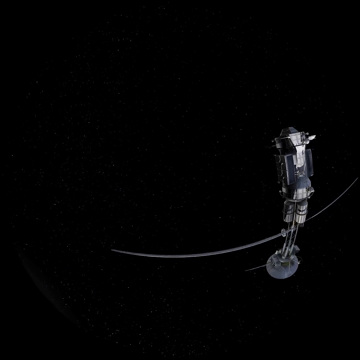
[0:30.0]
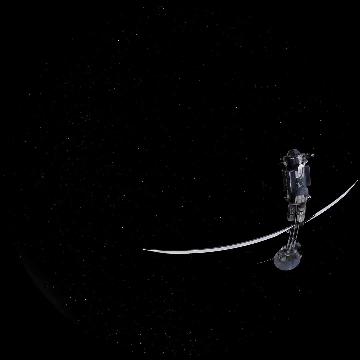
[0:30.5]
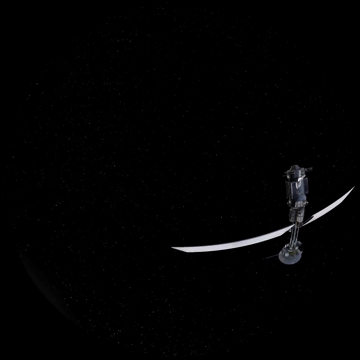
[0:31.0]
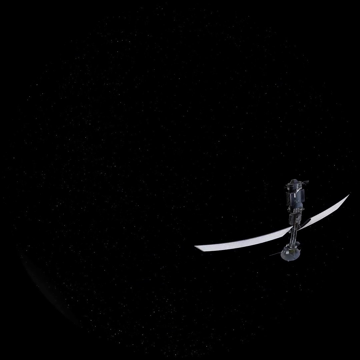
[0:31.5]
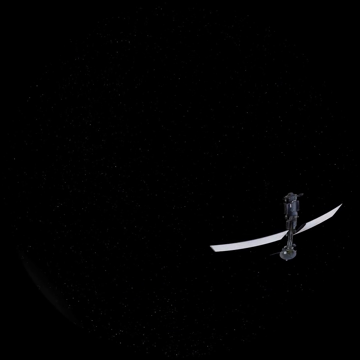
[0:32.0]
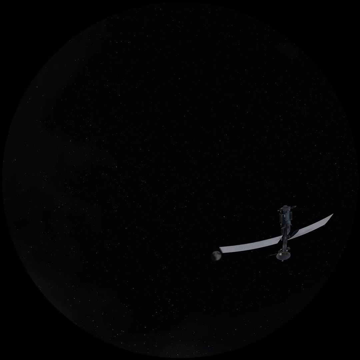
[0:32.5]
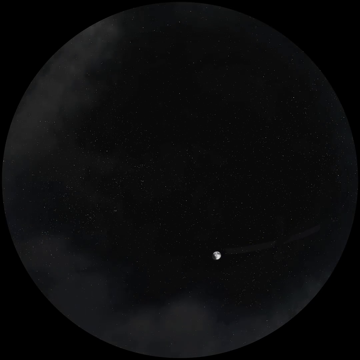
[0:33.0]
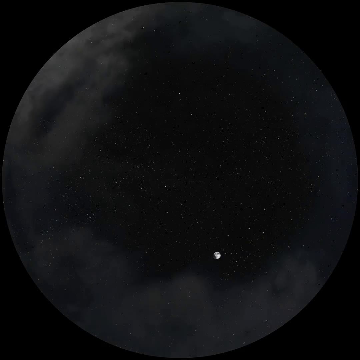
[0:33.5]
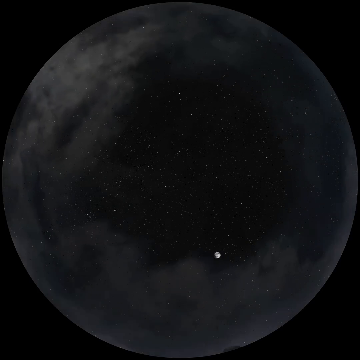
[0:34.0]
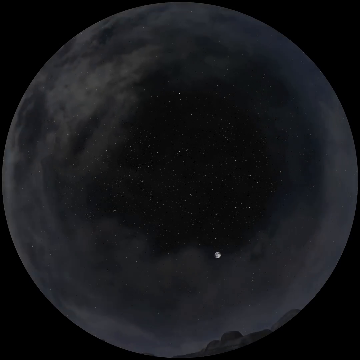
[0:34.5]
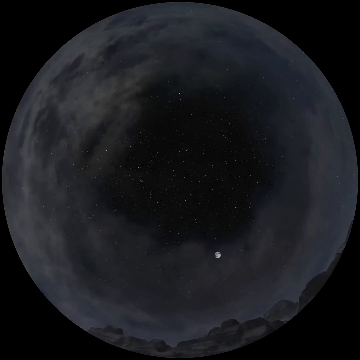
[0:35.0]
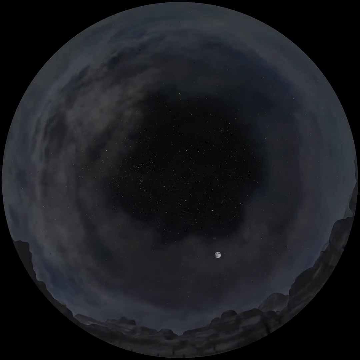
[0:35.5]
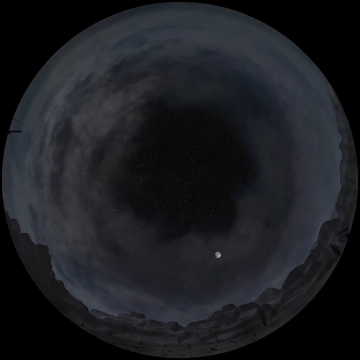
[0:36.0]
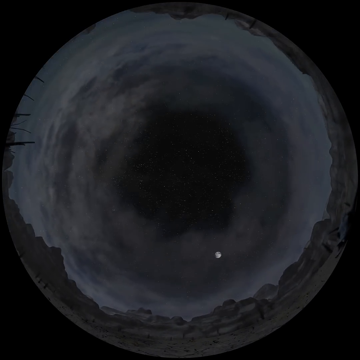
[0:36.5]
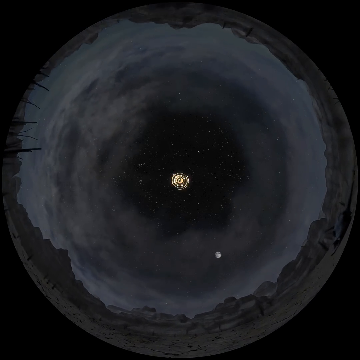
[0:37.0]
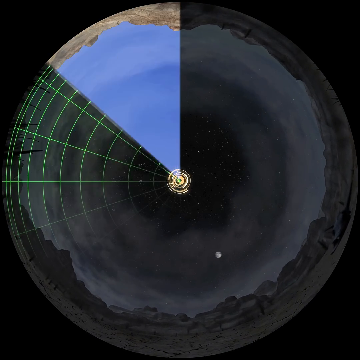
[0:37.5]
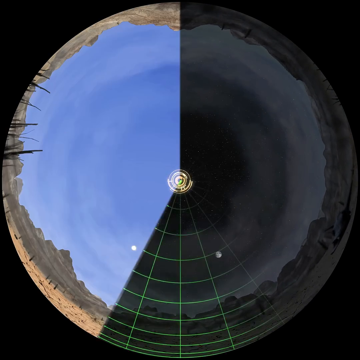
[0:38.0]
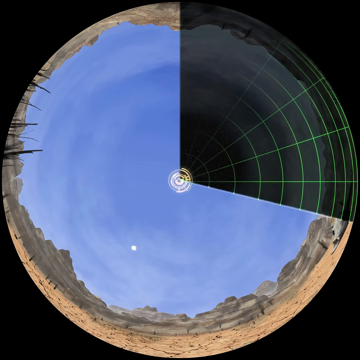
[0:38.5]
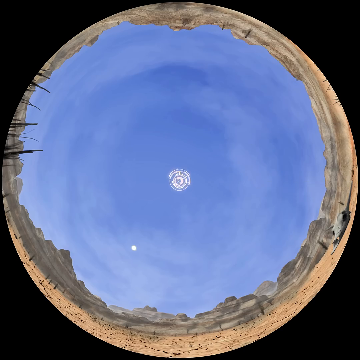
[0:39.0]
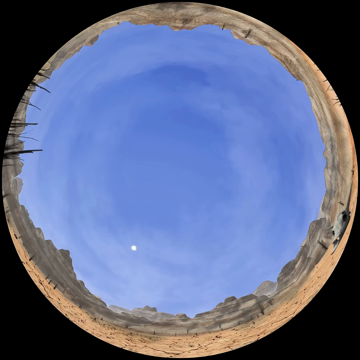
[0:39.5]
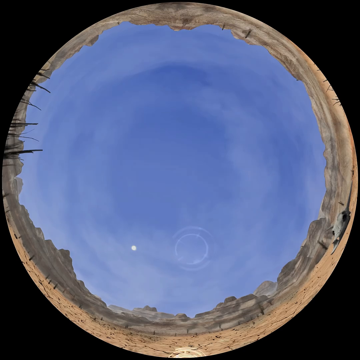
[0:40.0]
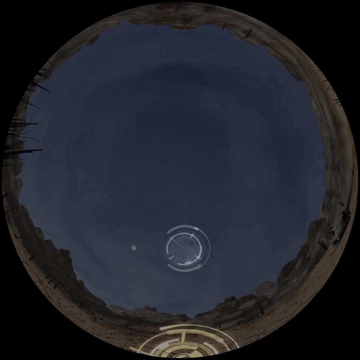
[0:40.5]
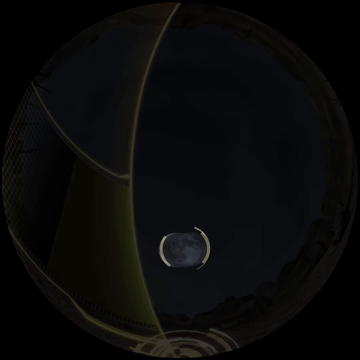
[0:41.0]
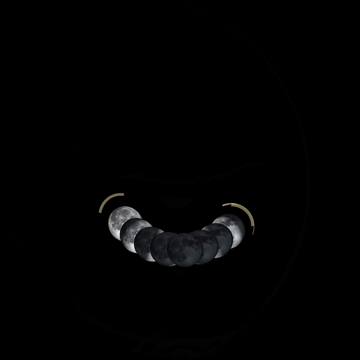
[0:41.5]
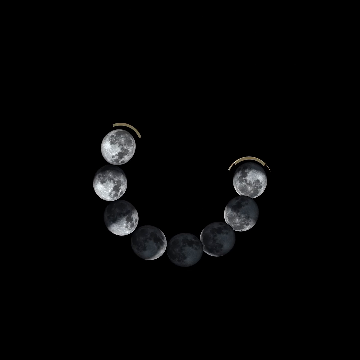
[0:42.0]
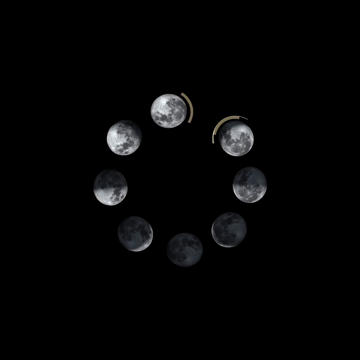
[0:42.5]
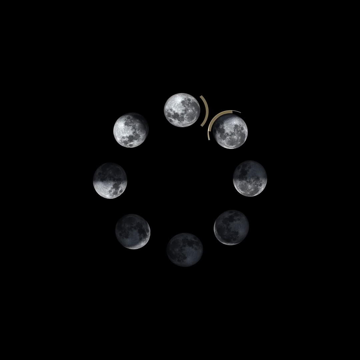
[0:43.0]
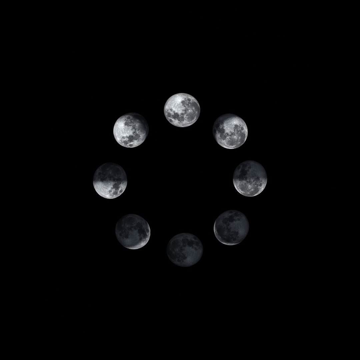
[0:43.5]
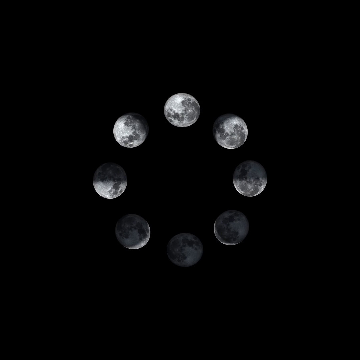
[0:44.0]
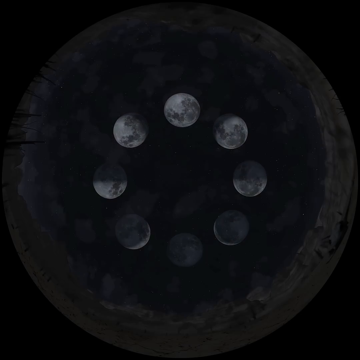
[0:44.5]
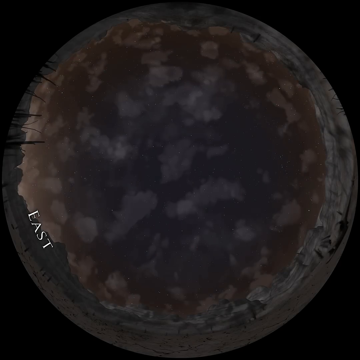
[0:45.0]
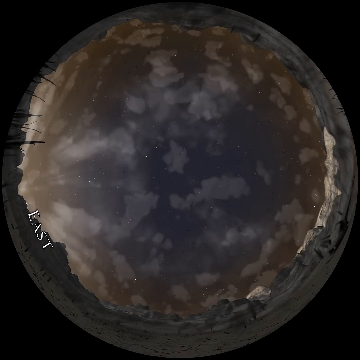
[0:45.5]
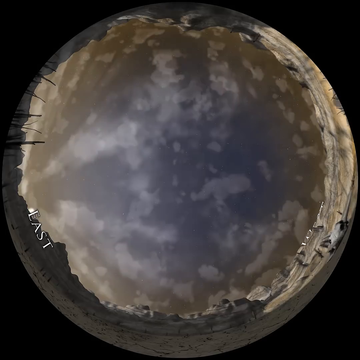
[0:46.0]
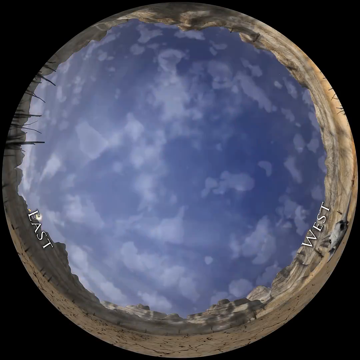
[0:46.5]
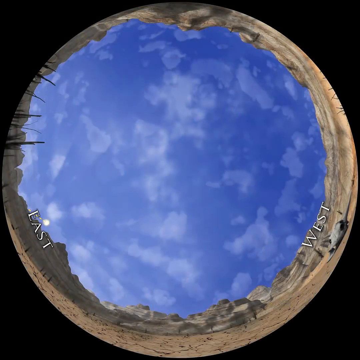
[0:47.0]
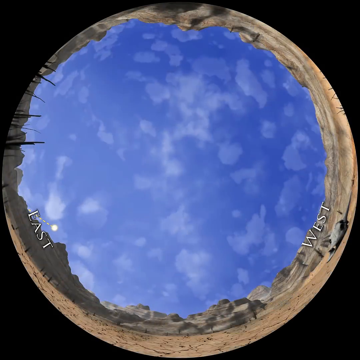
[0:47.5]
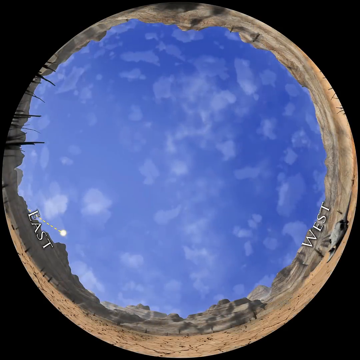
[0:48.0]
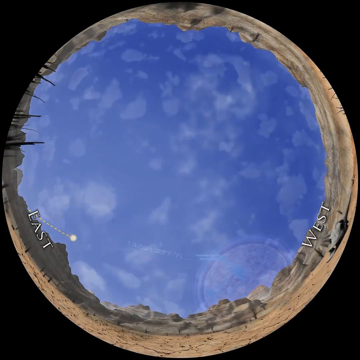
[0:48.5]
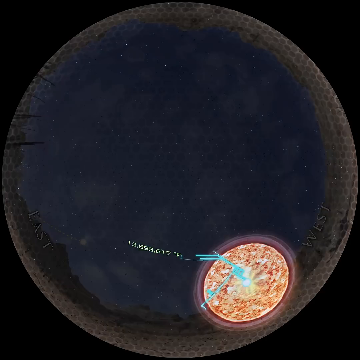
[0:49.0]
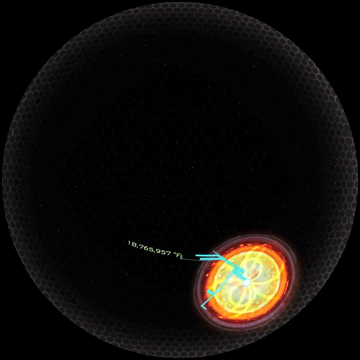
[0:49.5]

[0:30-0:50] A space station with two large panels on either side is in a large black area with nothing else around it. The video cuts to a circular camera view that zooms out, with what appears to be the ground at the bottom and the sky in the middle. Originally dark, the image changes in a swiping motion to show the same view during the day: rocks surround the circular view on every side, while the middle holds a blue sky with light, wispy clouds. It changes to a black screen that then shows a number of images of the moon, each with a different amount of light, as if showing the cycles of the moon, with a total of eight moons. Next comes another shot of the rocks around the circular sky, with the left side stating east and the right side stating west. Another image follows that appears to be a diagram of a circular object with a small yellow circle to its bottom right.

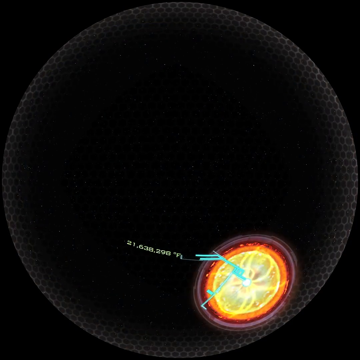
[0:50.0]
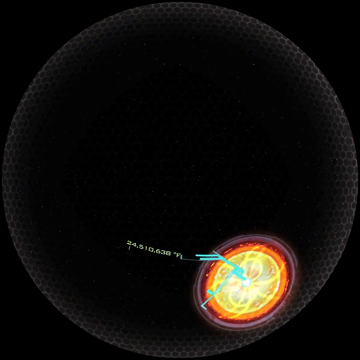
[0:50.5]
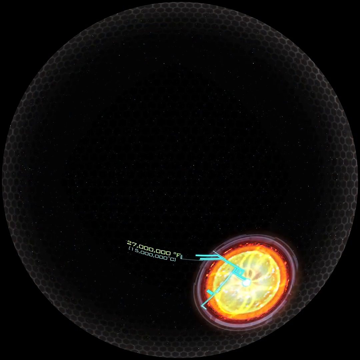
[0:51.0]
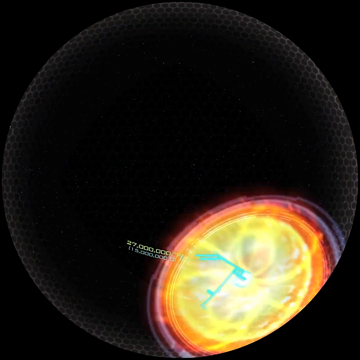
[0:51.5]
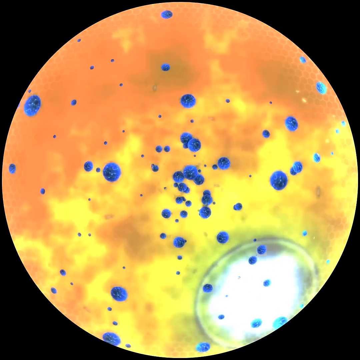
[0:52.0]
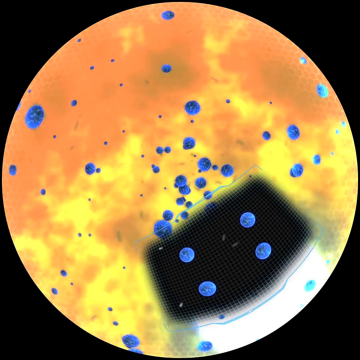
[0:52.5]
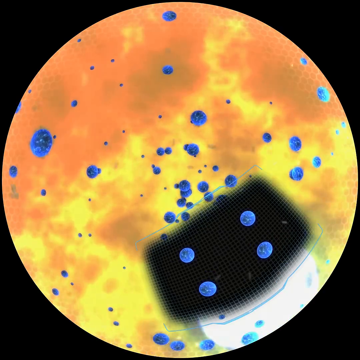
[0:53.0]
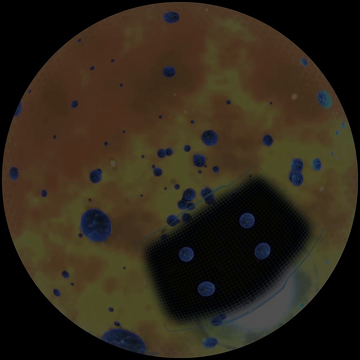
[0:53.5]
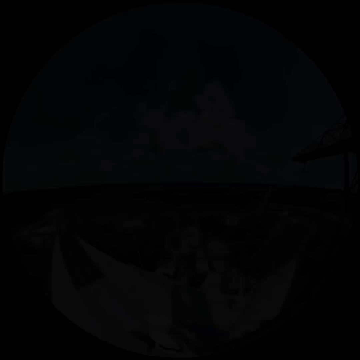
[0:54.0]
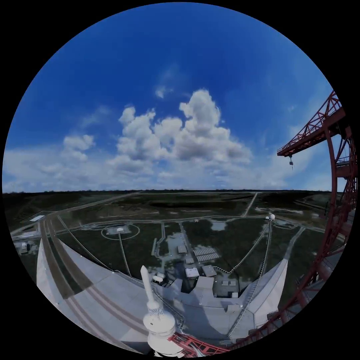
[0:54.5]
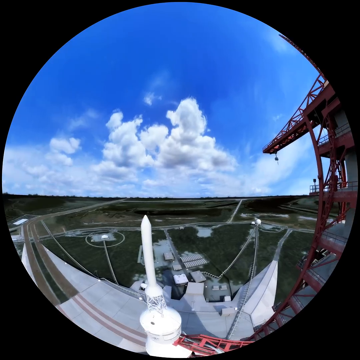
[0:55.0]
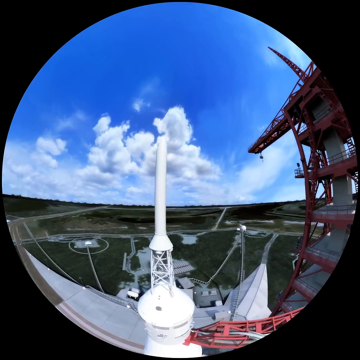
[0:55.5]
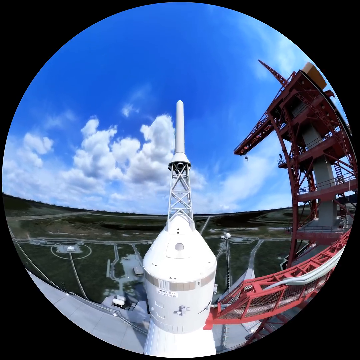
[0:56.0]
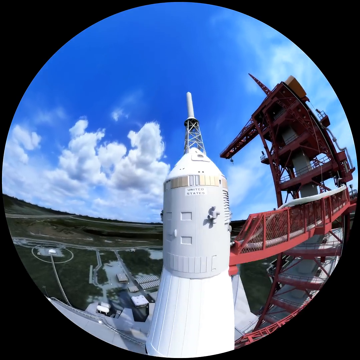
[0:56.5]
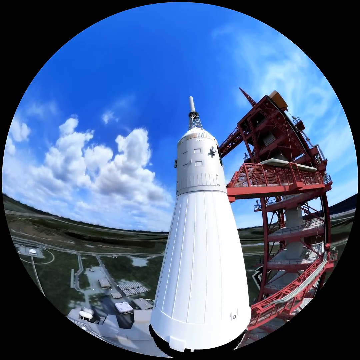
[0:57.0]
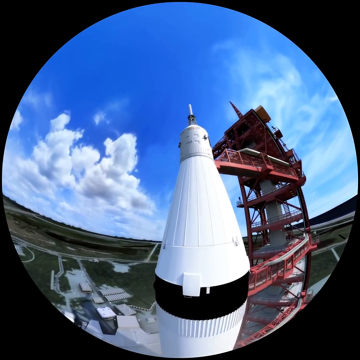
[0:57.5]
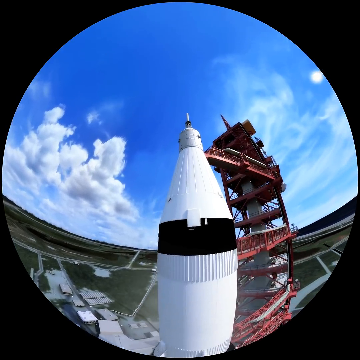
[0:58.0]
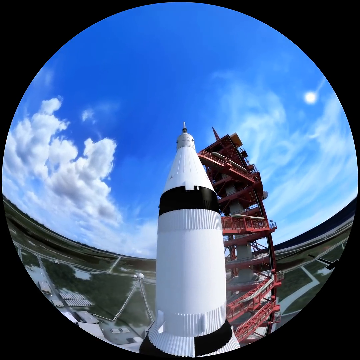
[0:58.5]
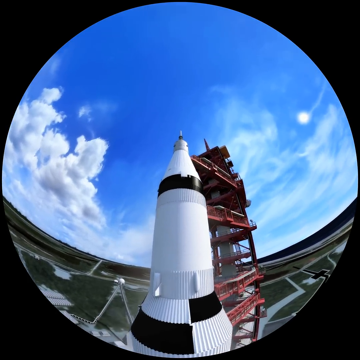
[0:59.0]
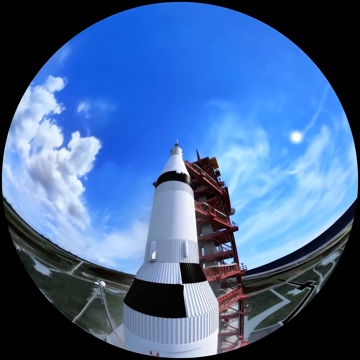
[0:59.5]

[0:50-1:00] A large circle is on the screen, shown with just a light outline. At its bottom, near the right, is a small yellow circle surrounded by an orange ring and then a red ring. A blue line with what appear to be coordinates points toward the center of the yellow circle. The smaller circle expands to take up the rest of the larger circle, so that most of the screen looks red, orange and yellow, with a number of blue dots all around. The view changes to a circular pinwheel-style camera view of a rocket platform. To the right is the platform itself, with red metal, a gray middle column, ladders and more, and the video shows the rocket close up.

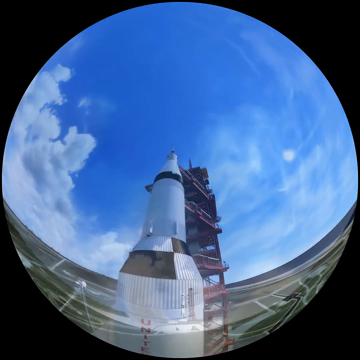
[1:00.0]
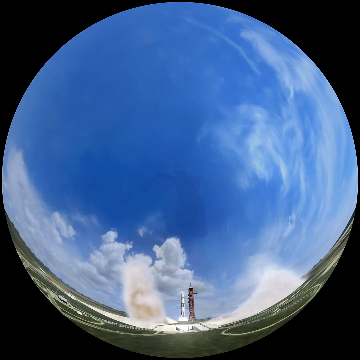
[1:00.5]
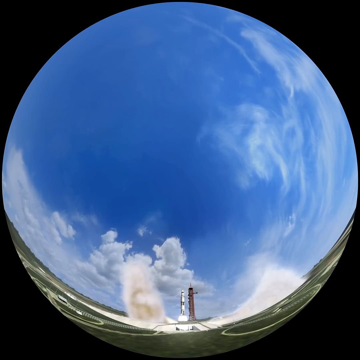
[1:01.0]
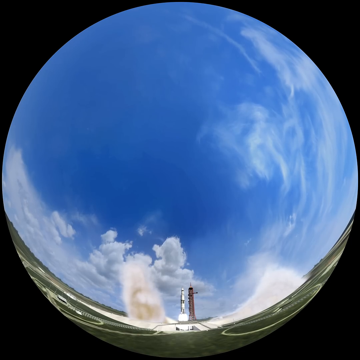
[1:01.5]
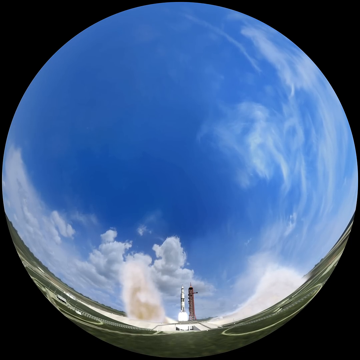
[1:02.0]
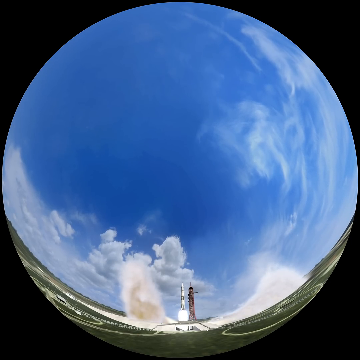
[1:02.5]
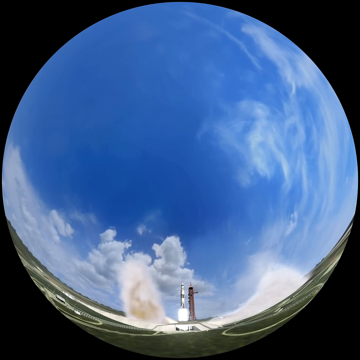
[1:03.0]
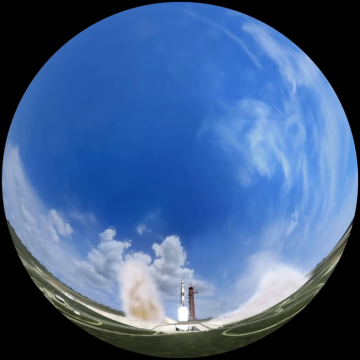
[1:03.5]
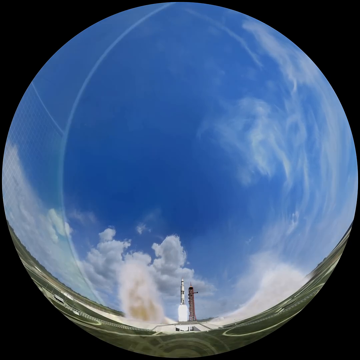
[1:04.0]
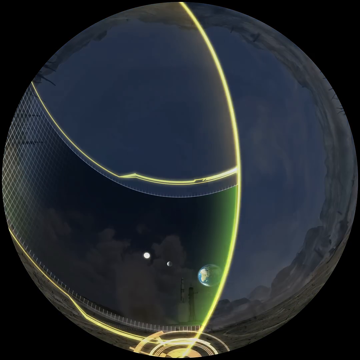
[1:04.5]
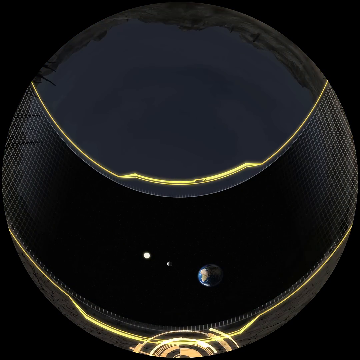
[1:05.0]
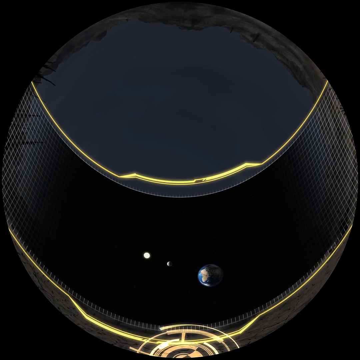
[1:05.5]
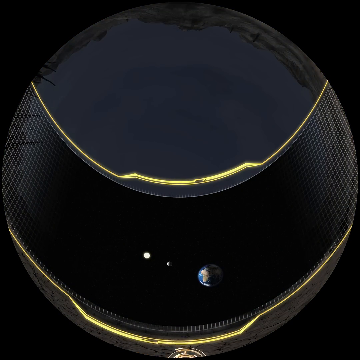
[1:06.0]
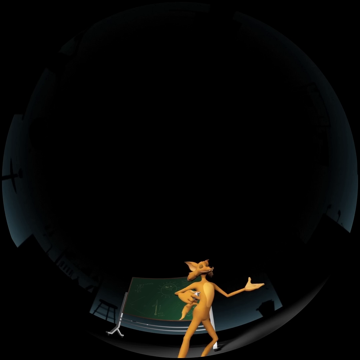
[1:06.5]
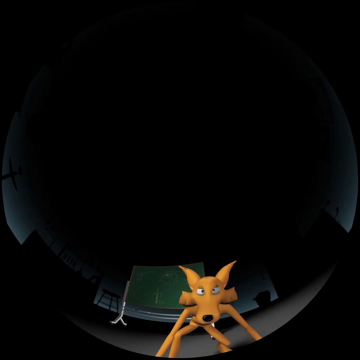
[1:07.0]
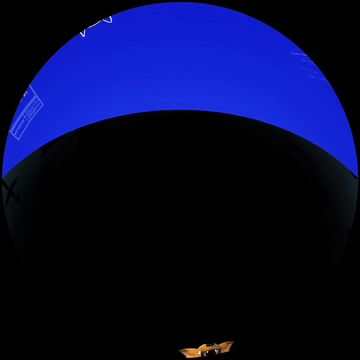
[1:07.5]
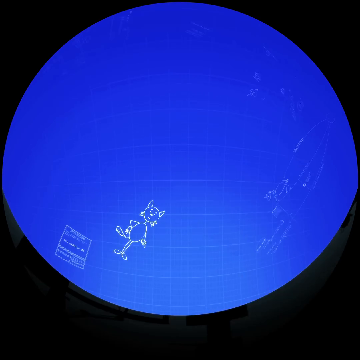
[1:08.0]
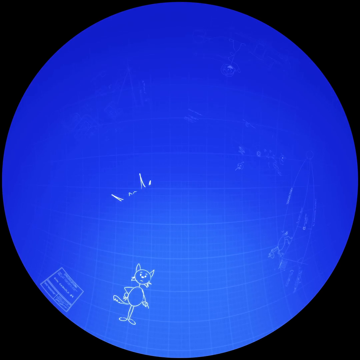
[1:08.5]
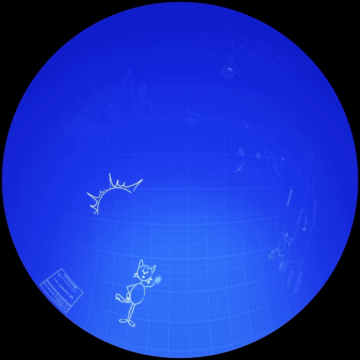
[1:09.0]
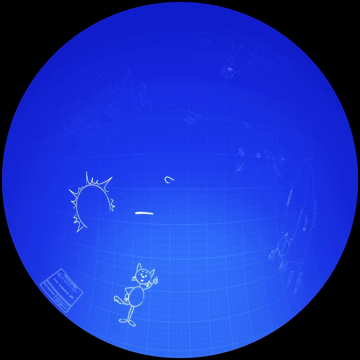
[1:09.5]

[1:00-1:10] A circular pinwheel-style shot shows a rocket, and the camera moves slowly down the rocket so more of it can be seen. It then changes to a rocket launch filmed from a far distance, still in the pinwheel camera style. Grass and the ground are at the bottom, and a blue sky with a few wispy clouds takes up most of the screen at the top. In the very middle at the bottom, the rocket is next to a red platform. The rocket begins to launch upward before the video cuts, keeping the circular view, to a small image of Earth and the moon at the bottom with yellow lines around the top and bottom. It cuts to a 3D image of a fox or similar animal standing in front of a whiteboard. The fox leans down and seems to pick up the camera, which changes the view to another circular image, this time of a blueprint-style fox that moves around.